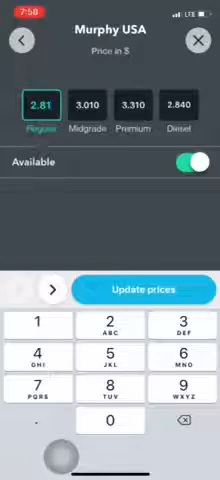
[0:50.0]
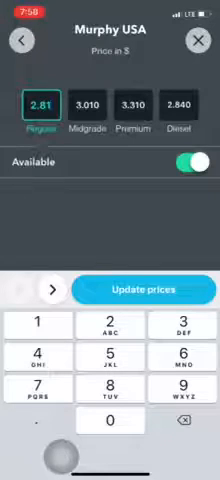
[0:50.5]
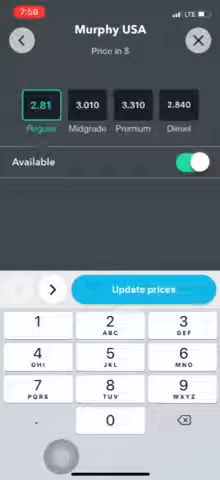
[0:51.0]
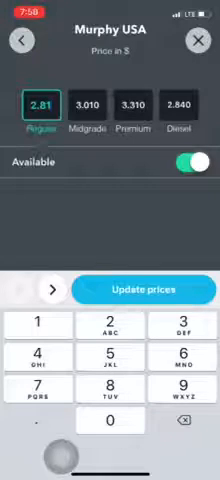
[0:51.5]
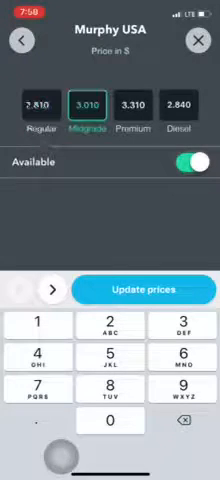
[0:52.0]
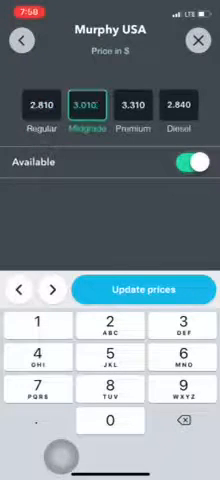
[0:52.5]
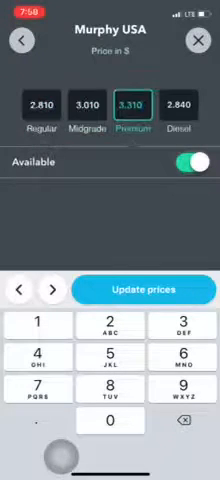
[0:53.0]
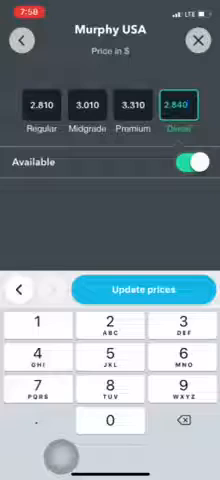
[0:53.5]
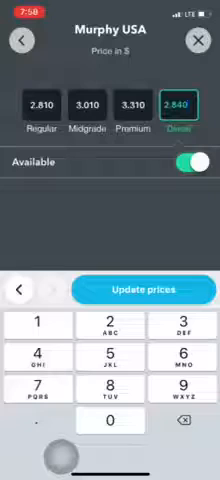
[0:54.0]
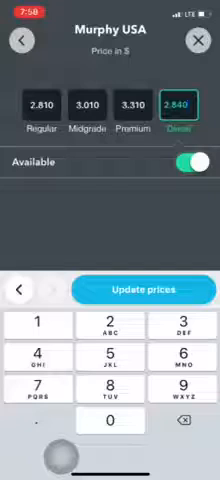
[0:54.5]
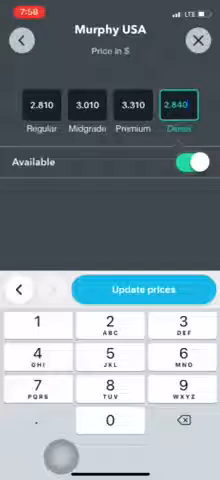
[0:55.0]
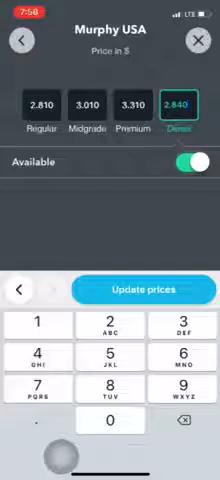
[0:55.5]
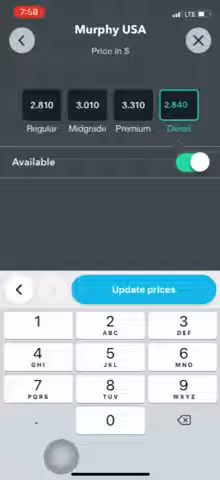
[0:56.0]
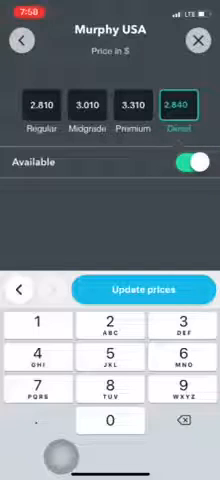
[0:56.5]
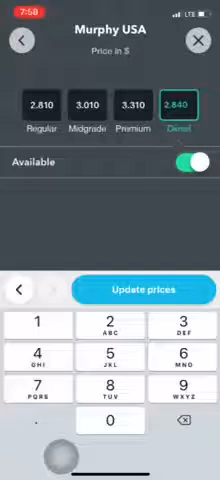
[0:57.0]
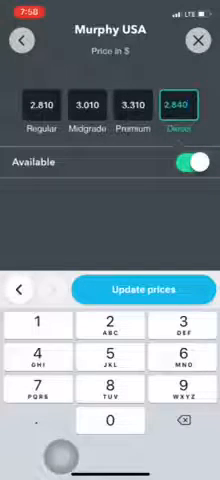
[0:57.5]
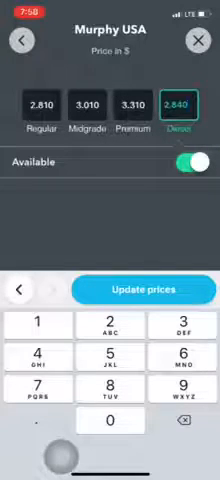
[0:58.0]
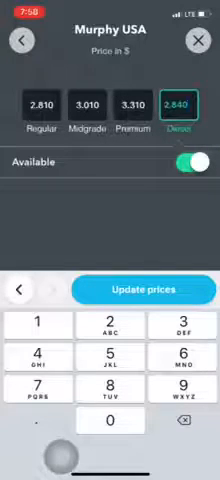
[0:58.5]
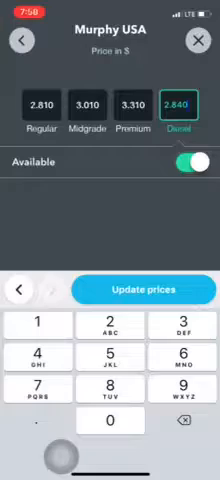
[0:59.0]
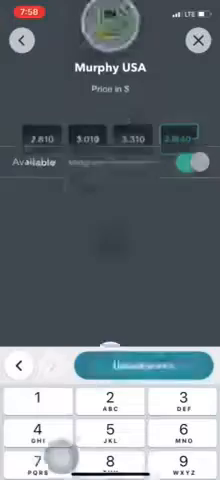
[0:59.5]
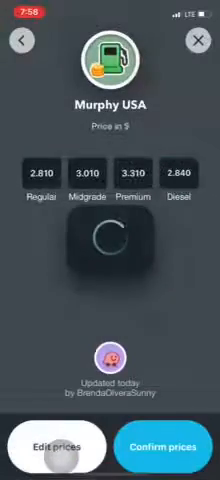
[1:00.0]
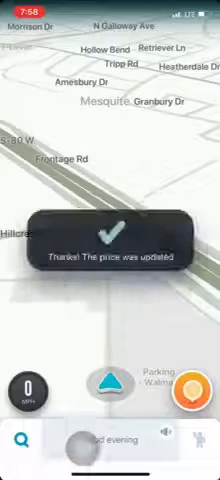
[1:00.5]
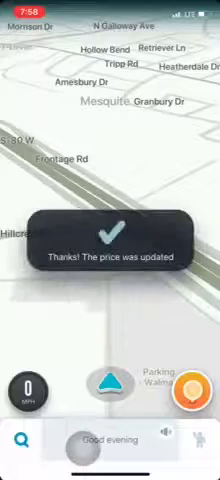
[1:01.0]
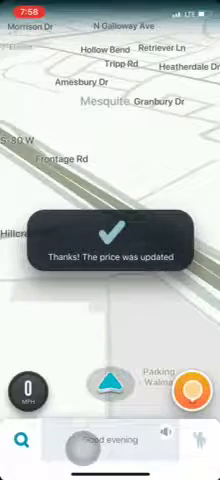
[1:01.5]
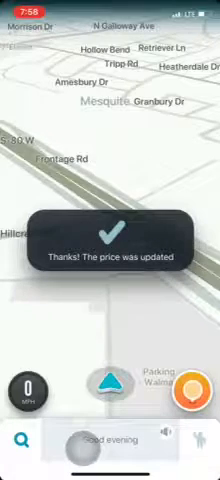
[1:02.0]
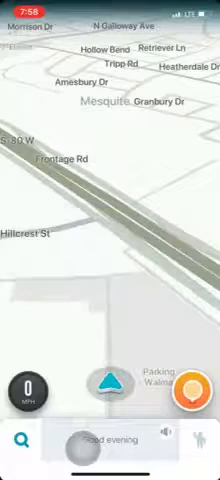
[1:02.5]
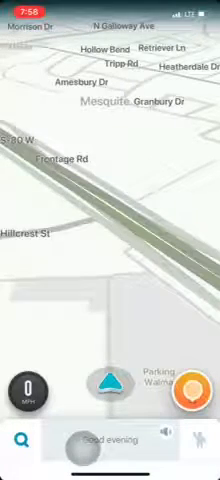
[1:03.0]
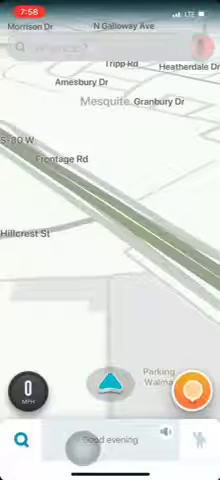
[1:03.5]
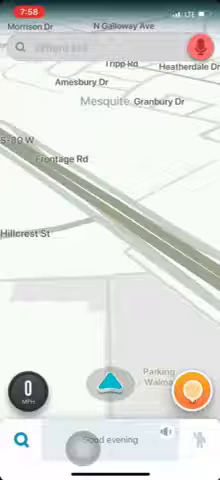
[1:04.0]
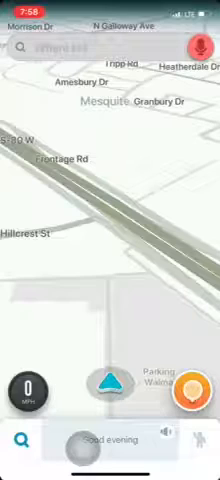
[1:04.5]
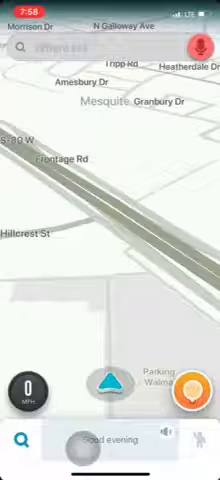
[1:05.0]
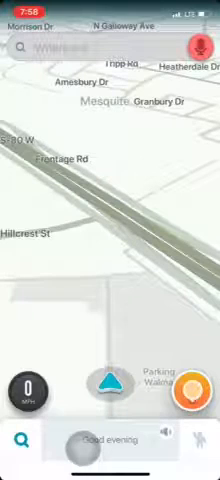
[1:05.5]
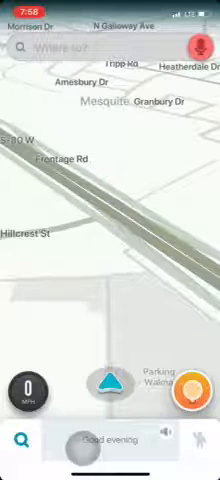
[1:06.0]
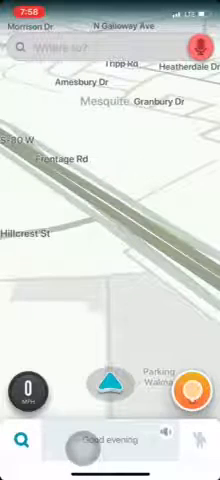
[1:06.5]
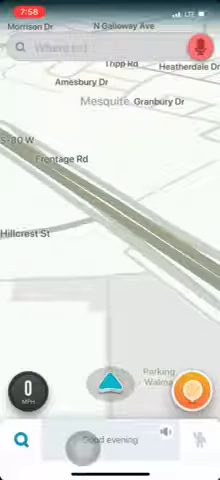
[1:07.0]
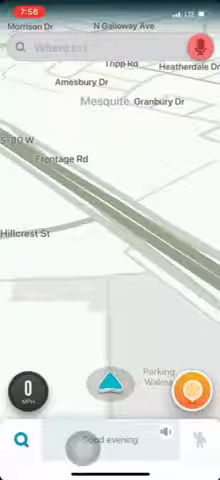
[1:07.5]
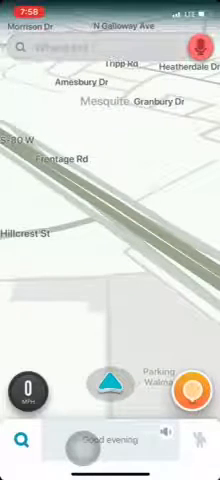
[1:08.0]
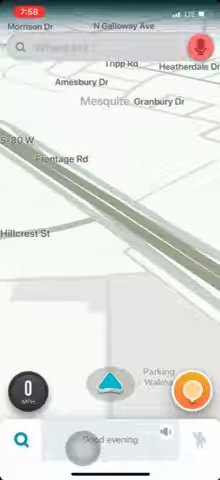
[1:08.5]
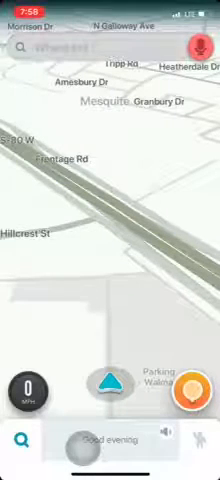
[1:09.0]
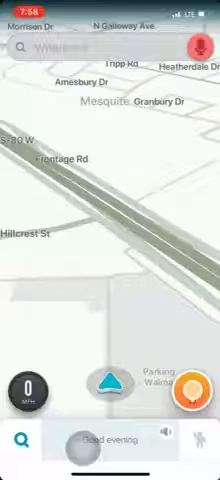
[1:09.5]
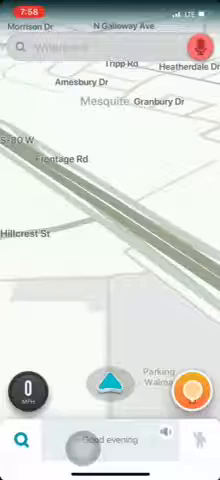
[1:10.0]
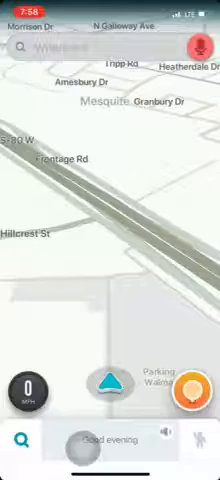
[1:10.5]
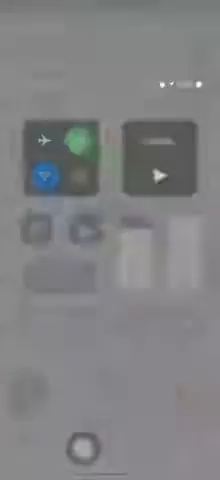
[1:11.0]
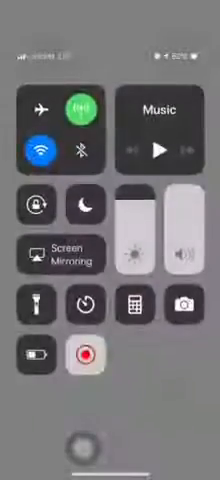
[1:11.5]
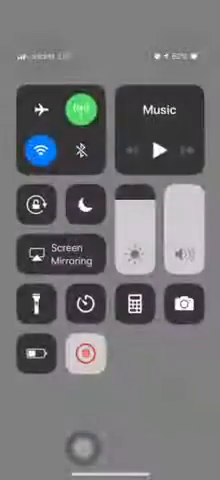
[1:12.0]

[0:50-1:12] The app lists the different types of gas with their updated prices in the area, including diesel and premium. The app apparently can also give directions to the nearest gas station with a good price.